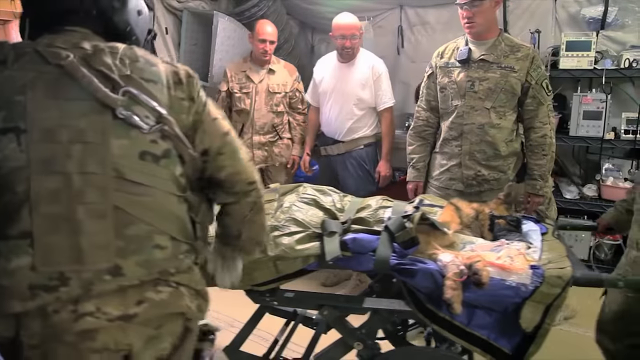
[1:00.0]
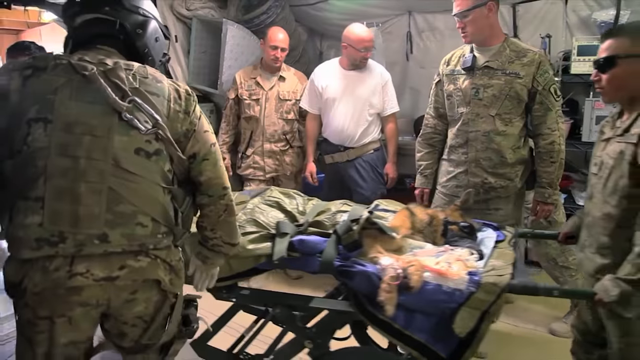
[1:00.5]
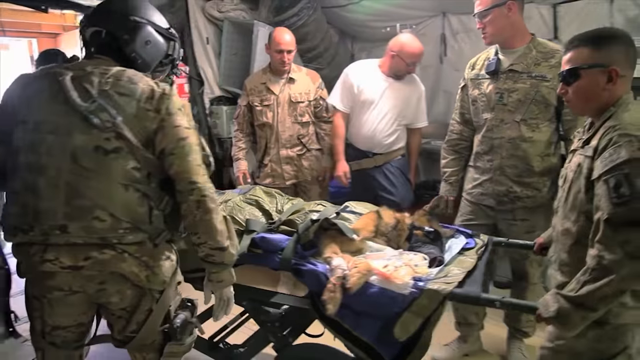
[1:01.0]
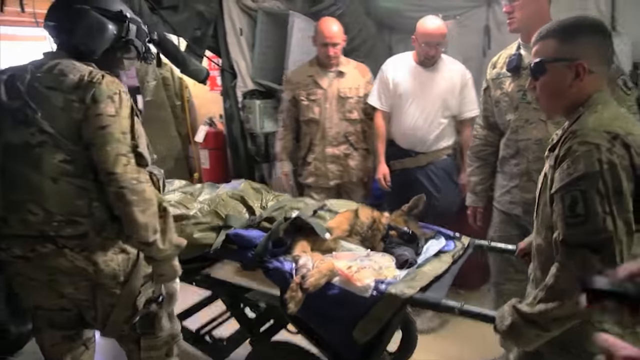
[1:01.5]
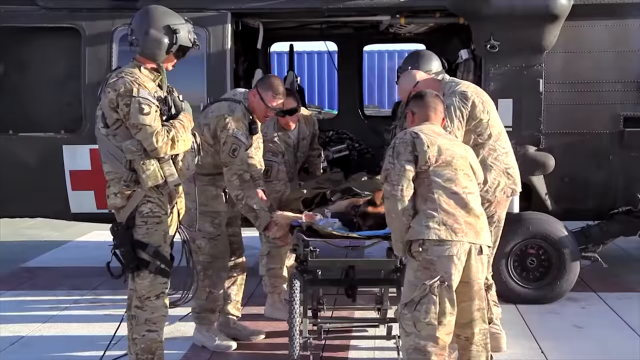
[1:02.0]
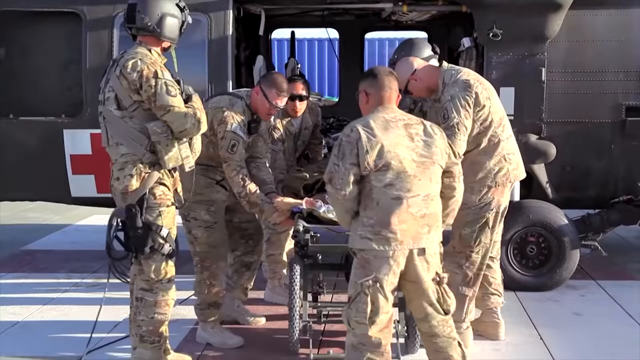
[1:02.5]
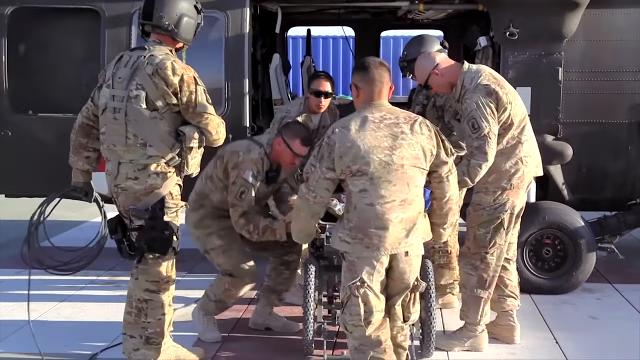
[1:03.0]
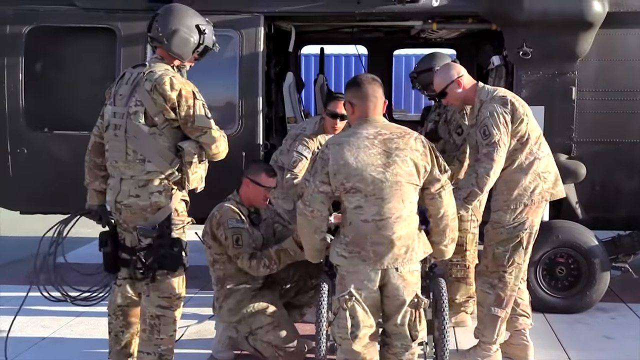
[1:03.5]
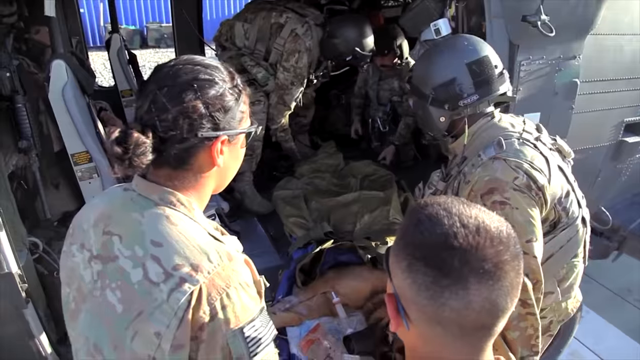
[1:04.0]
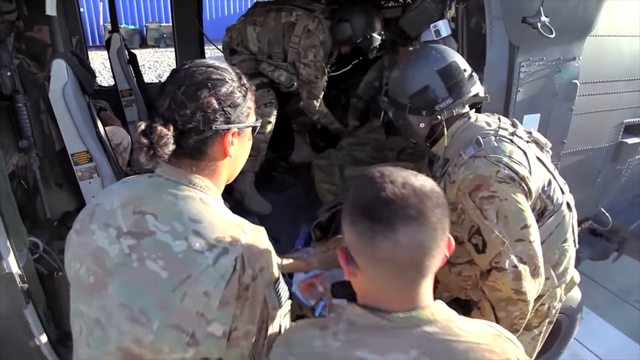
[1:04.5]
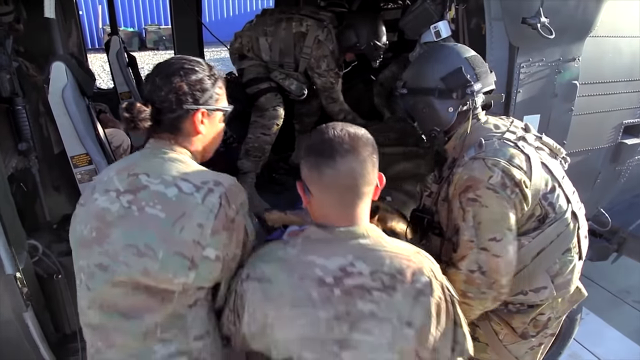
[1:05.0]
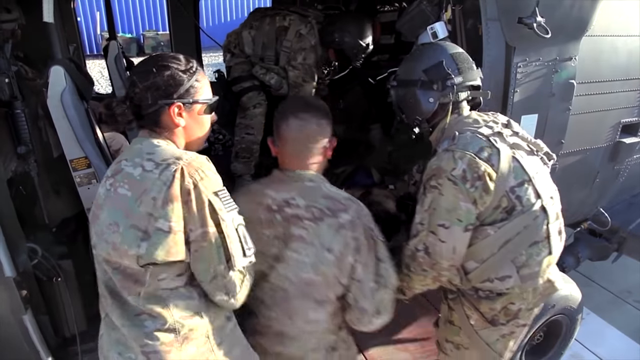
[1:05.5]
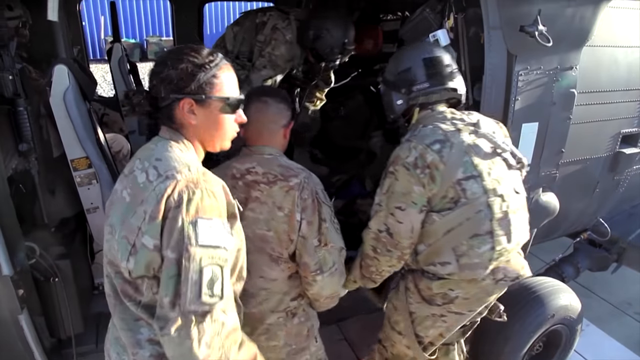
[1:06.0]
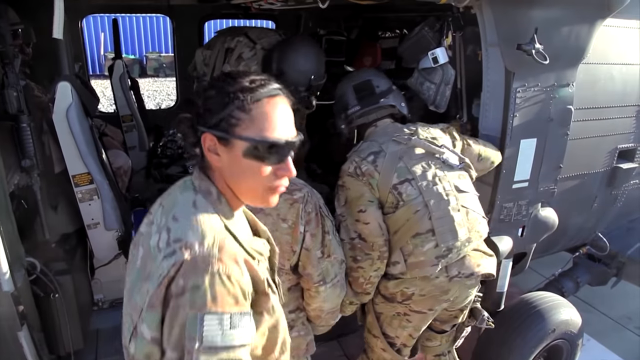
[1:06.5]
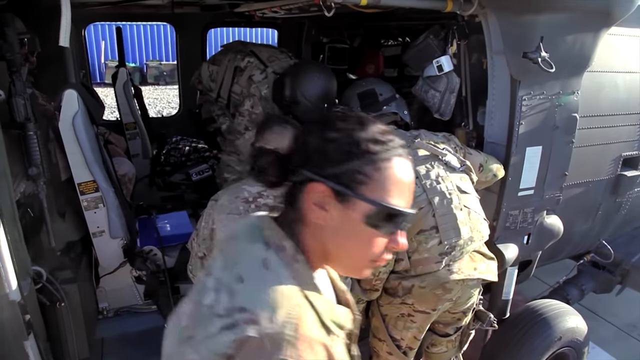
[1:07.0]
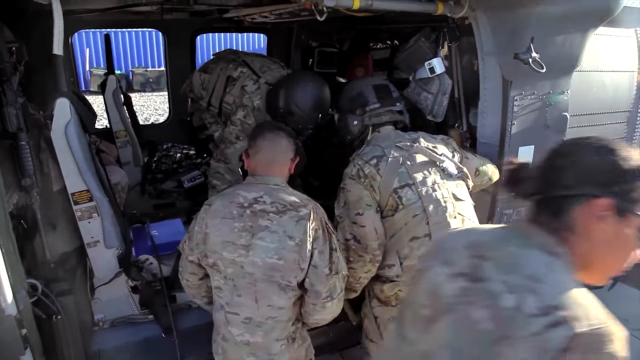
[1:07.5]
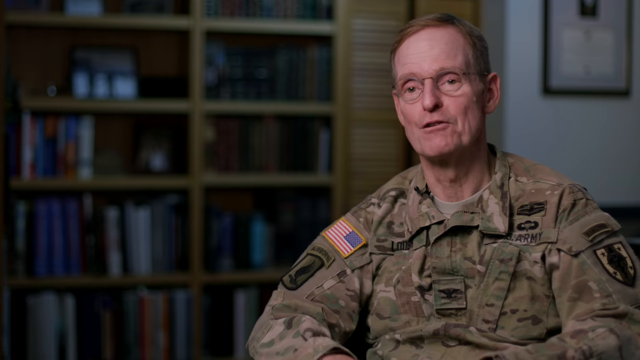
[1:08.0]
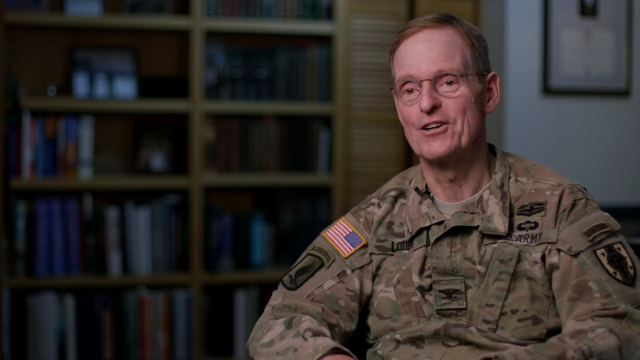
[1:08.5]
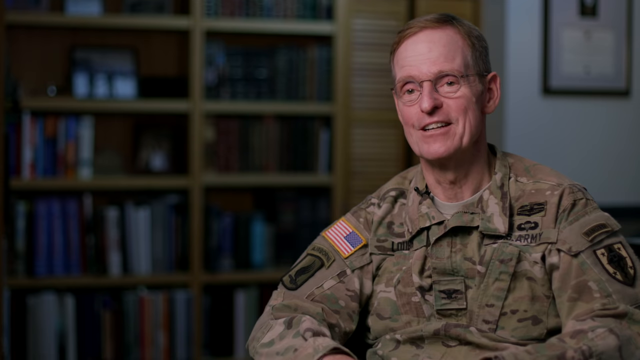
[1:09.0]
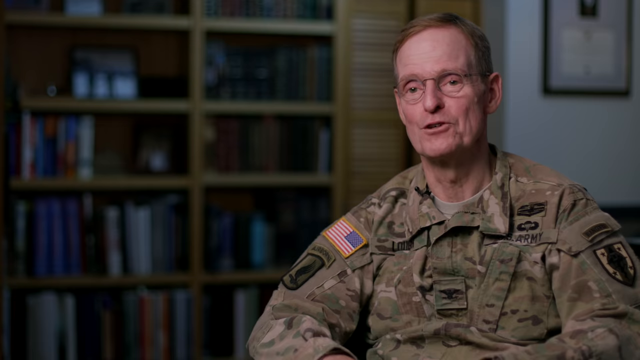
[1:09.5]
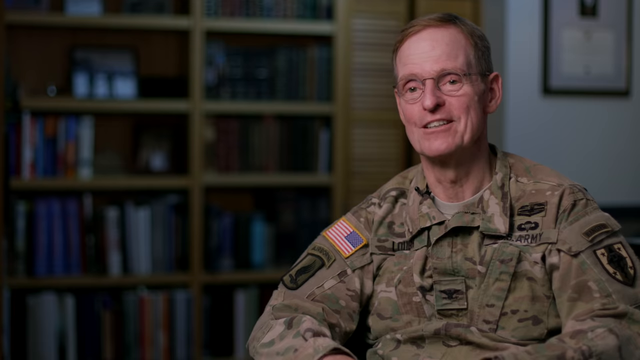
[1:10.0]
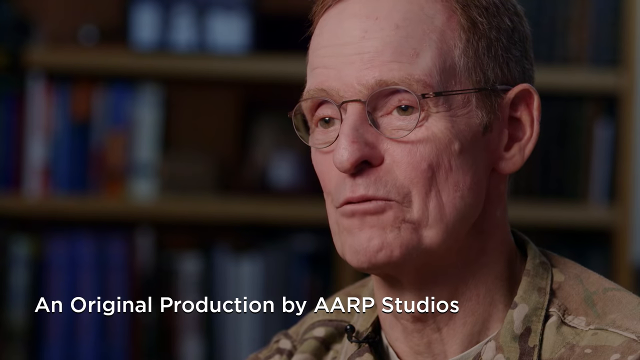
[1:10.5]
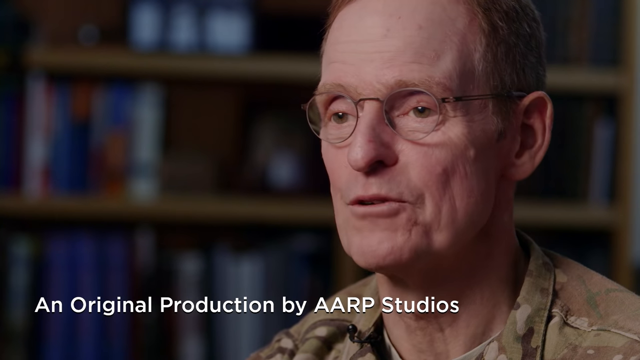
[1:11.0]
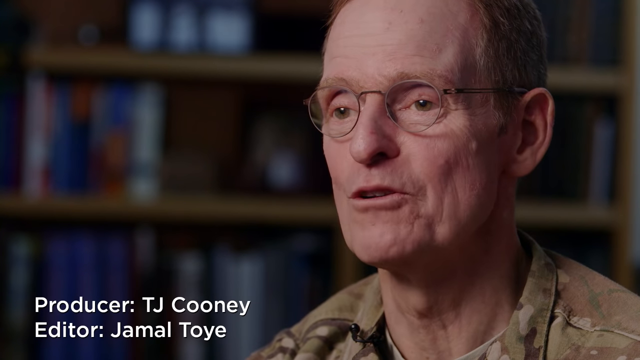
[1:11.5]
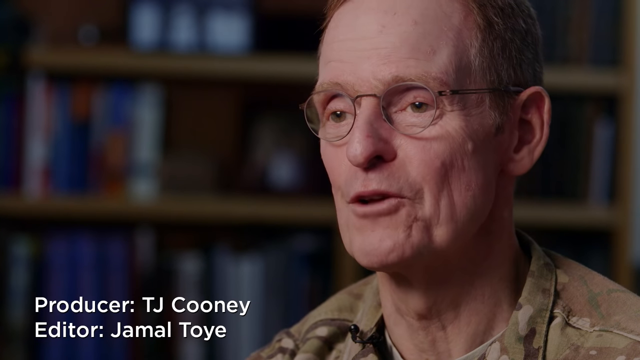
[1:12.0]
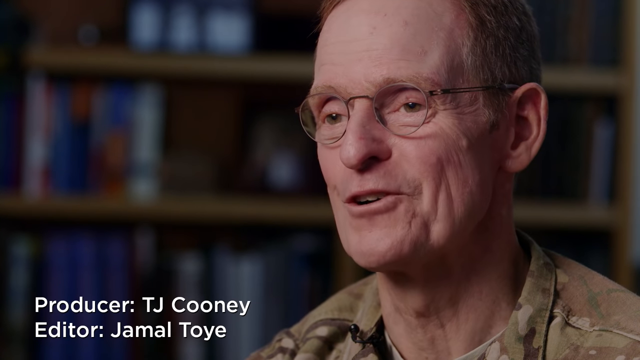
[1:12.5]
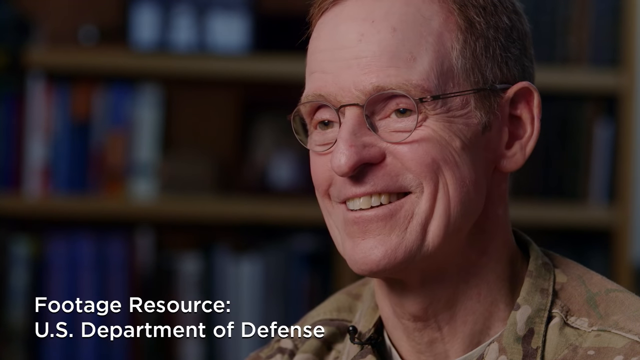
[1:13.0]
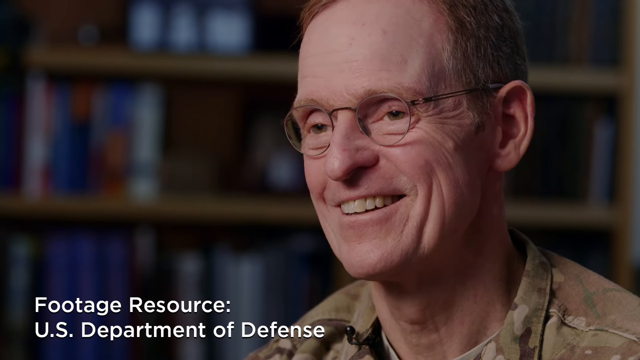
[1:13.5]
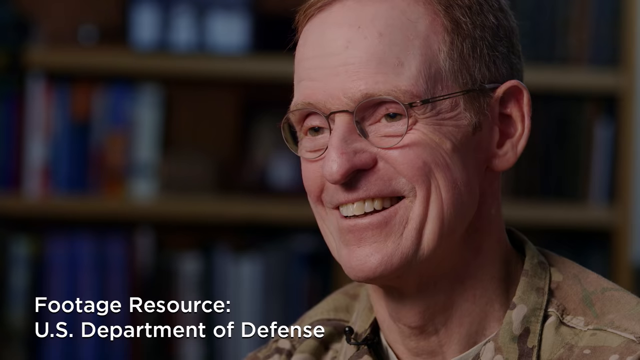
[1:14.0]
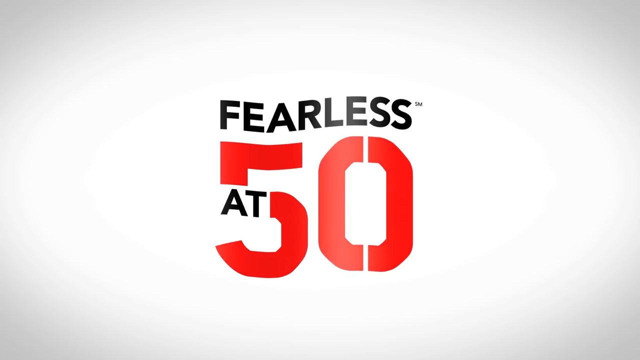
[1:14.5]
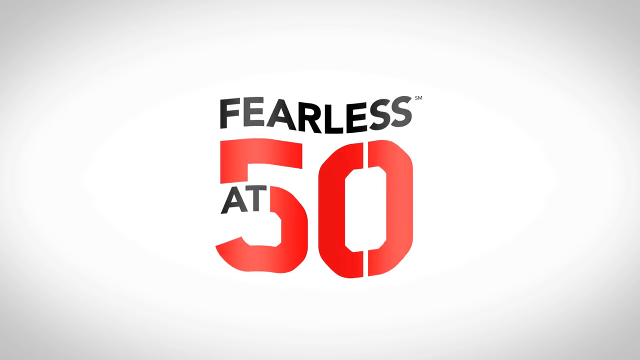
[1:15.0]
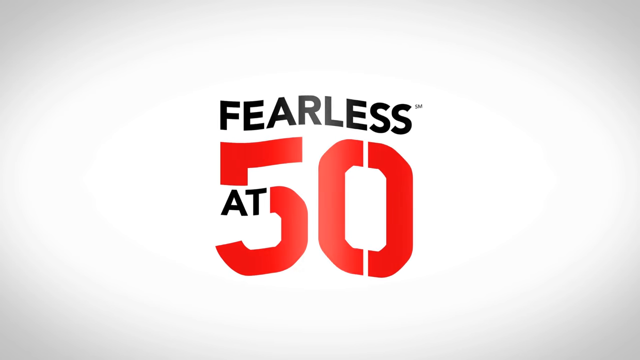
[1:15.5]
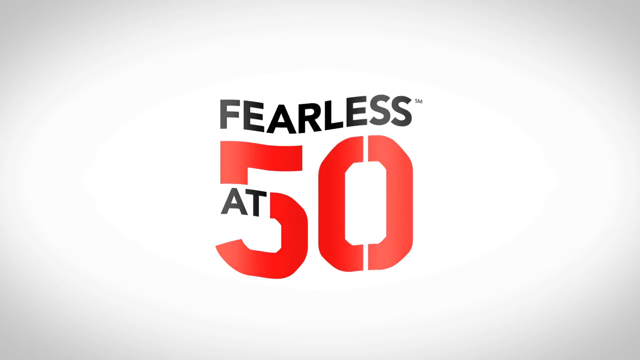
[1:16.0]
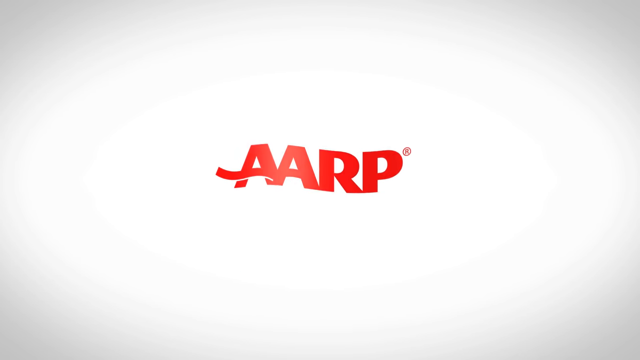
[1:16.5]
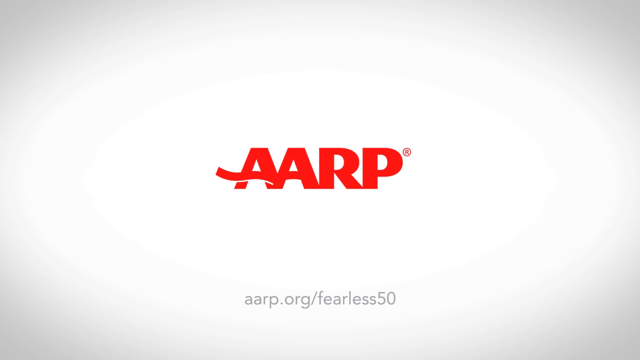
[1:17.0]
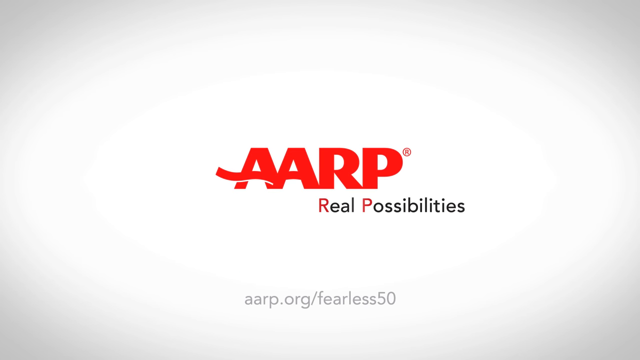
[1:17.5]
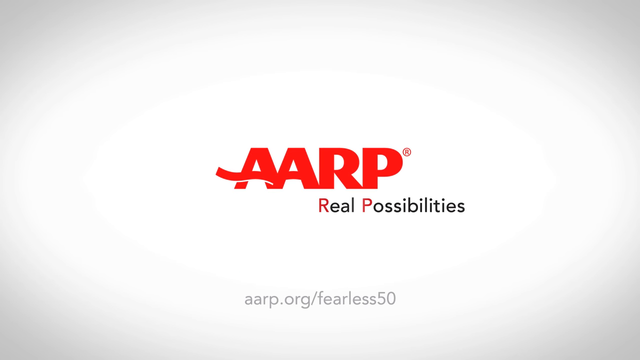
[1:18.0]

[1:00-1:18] The army German Shepherd has just been through surgery. He is shown on a gurney being moved out of the area where the surgery took place, then moved outside the field tent, and finally loaded onto a military helicopter, all by a group of people in army uniforms. At the end, an older military gentleman with glasses smiles into the camera and talks; judging by his smile, the surgery appears to have been successful. The video then cuts to "fearless at 50," shows that this is an AARP video, and fades to black.